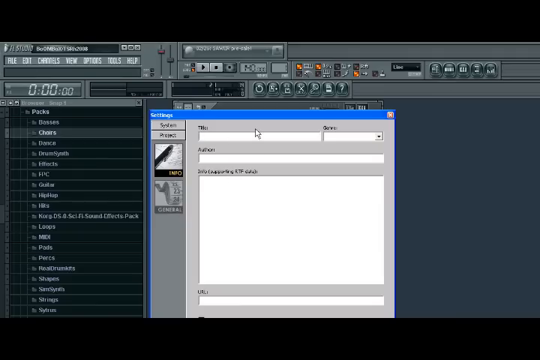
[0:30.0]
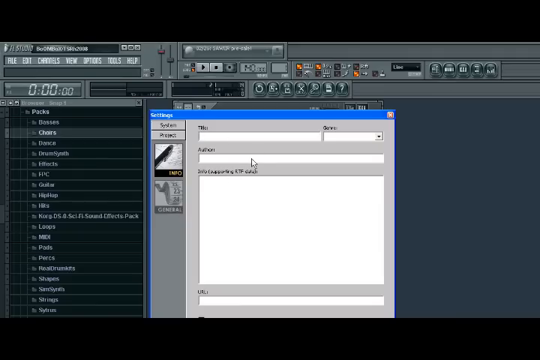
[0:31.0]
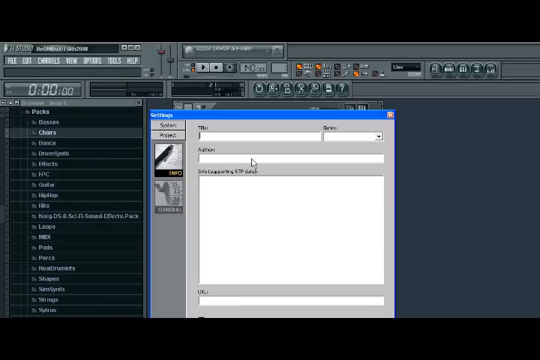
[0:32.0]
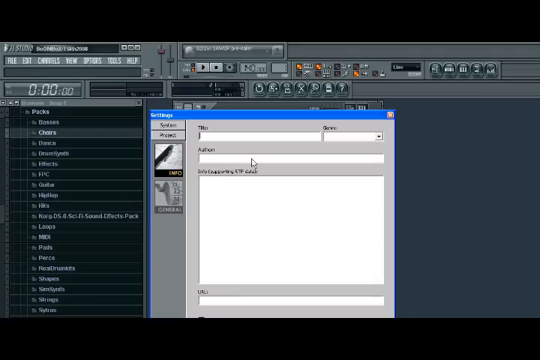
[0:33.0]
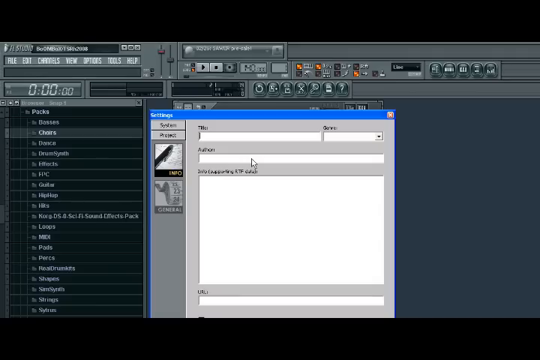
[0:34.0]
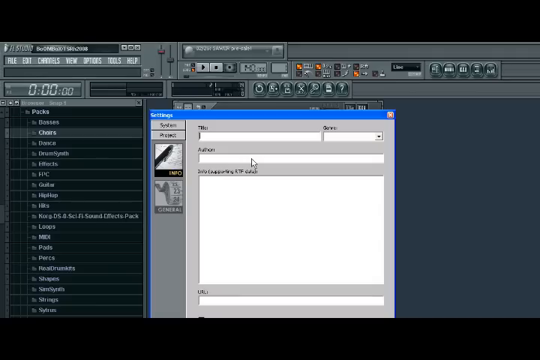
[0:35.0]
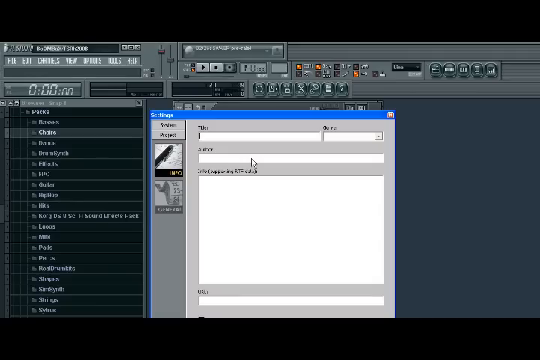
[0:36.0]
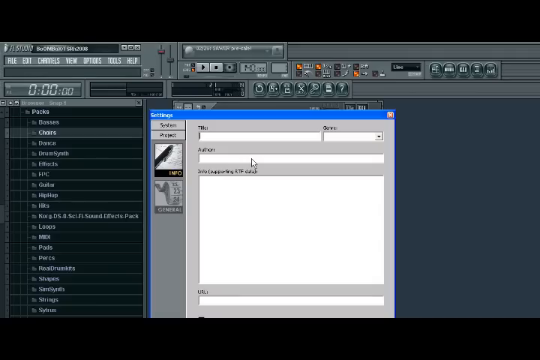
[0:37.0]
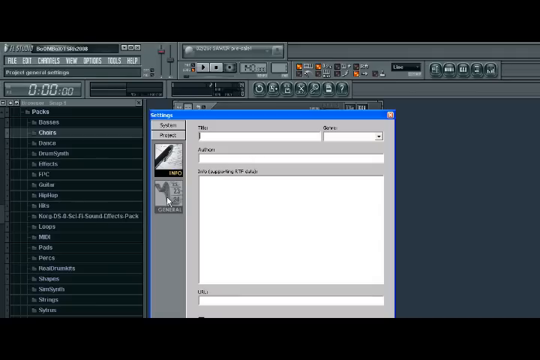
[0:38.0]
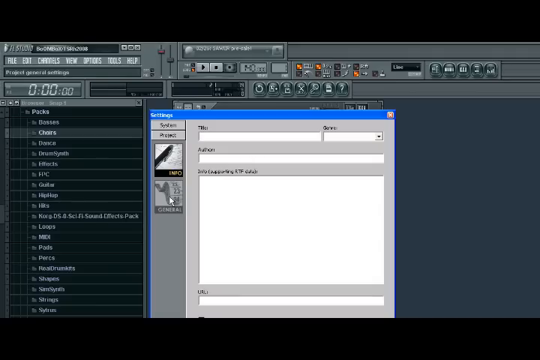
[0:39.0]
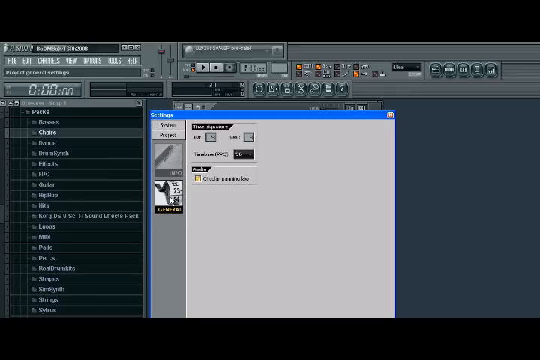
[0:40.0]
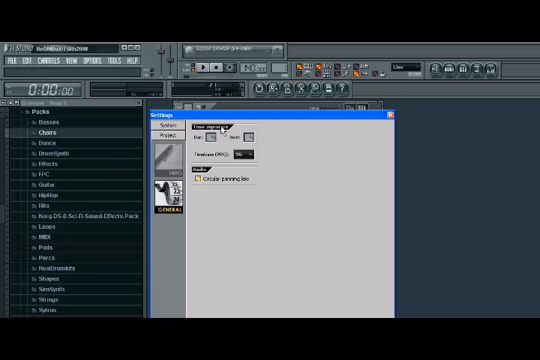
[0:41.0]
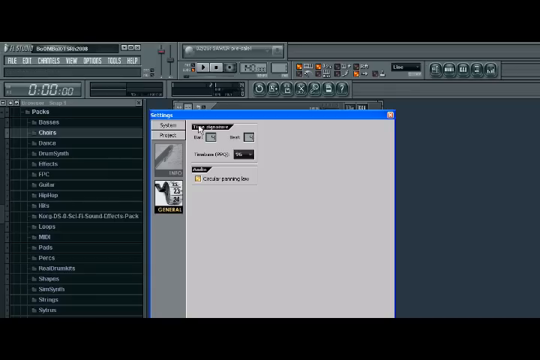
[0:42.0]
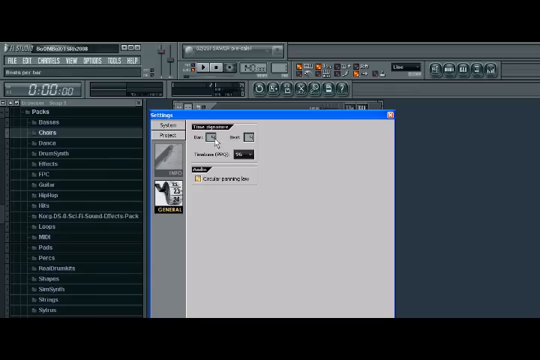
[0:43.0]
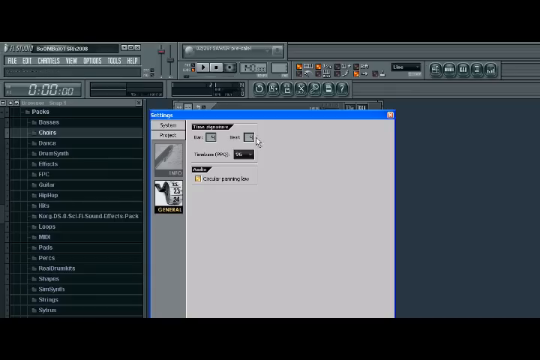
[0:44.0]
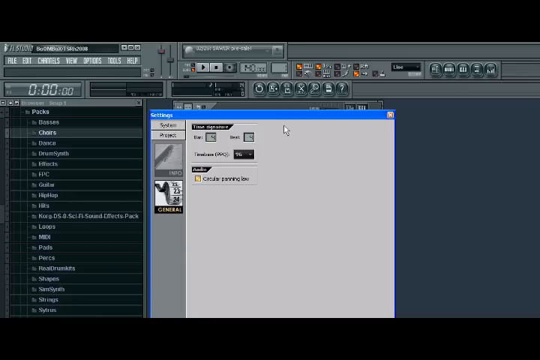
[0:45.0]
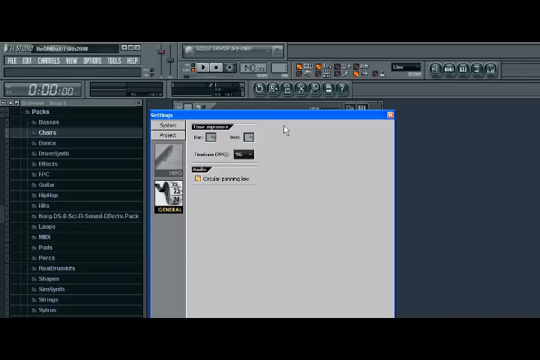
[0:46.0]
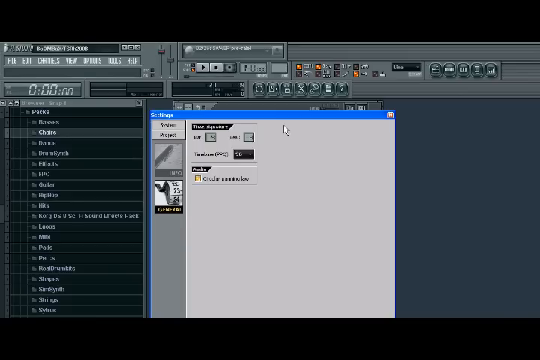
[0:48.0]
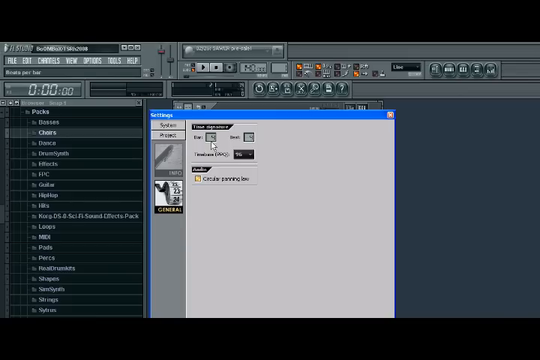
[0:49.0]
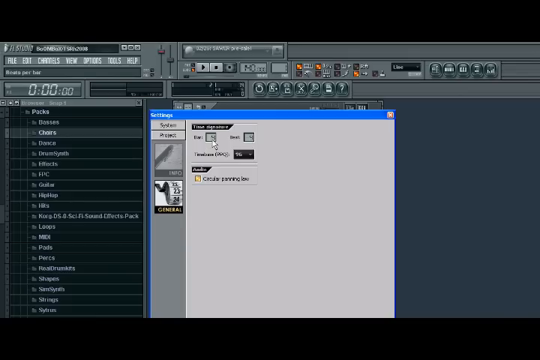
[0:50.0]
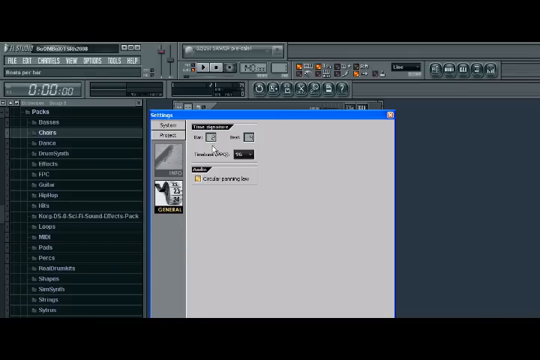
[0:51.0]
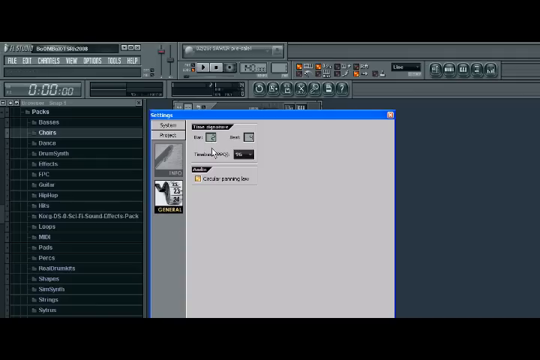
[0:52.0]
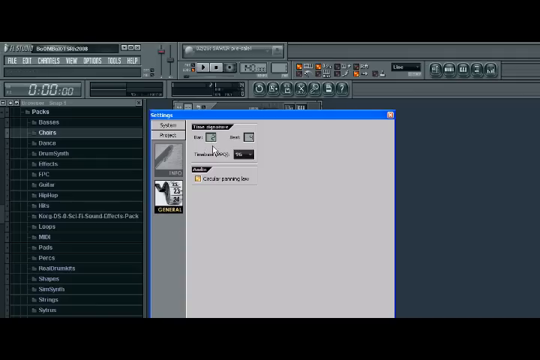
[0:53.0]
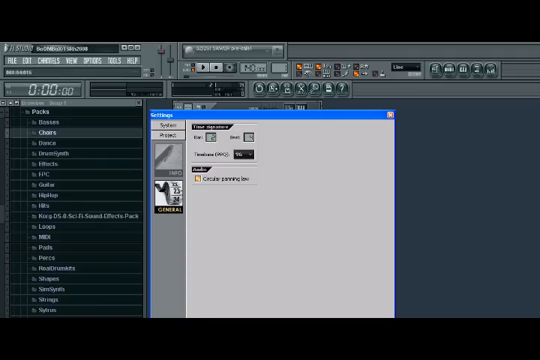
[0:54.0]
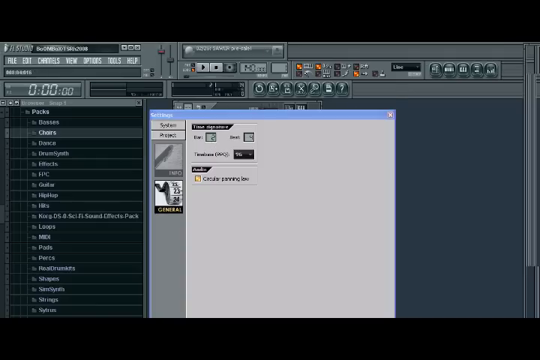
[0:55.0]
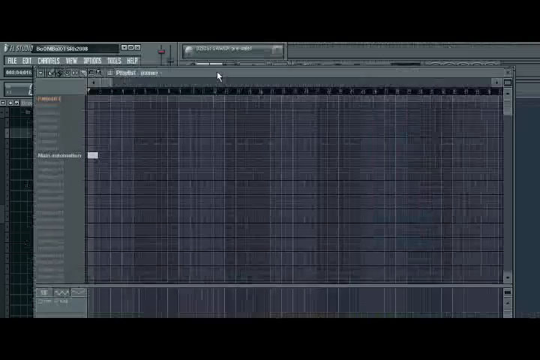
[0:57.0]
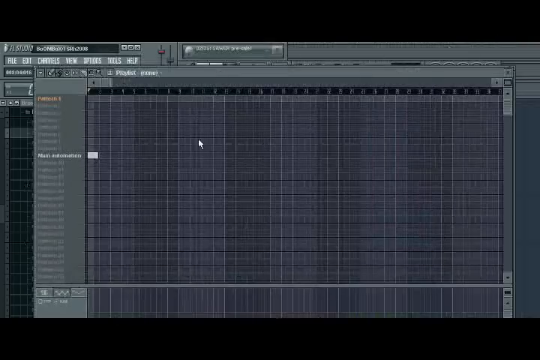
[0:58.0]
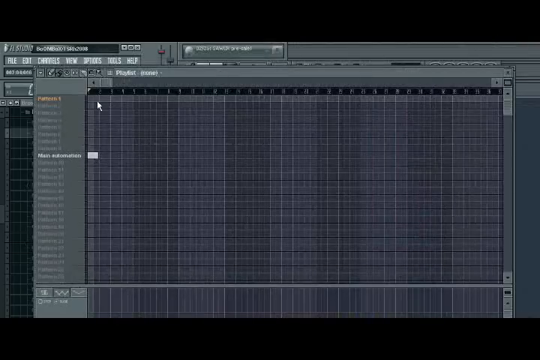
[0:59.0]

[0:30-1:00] The video quality is fairly low and blurry, making it hard to tell what the text says. The view transitions to another screen showing settings and input fields on a sort of light gray and gray background, with a blue header and square settings in white. A specific beat, or some sort of song or channel, is then opened in FL Studio, bringing up a secondary screen that is dragged onto the original main screen. No people or animals appear. On the last screen there seem to be purple and black hexagonal lines.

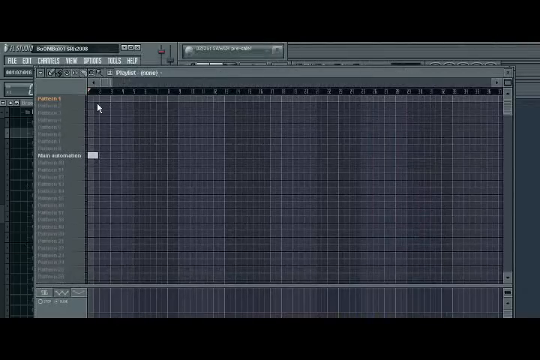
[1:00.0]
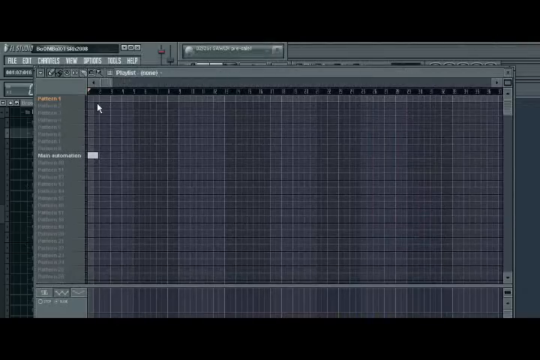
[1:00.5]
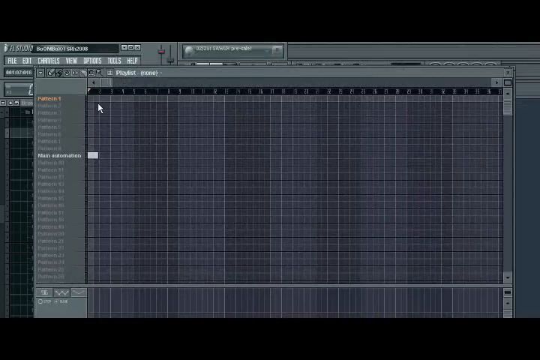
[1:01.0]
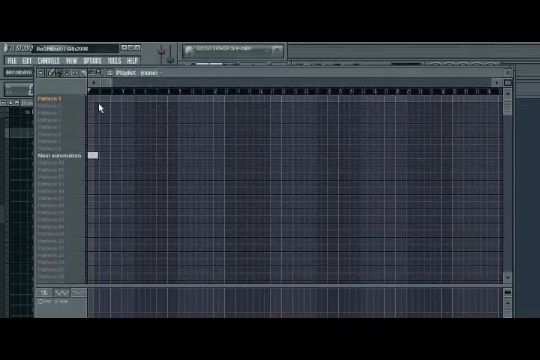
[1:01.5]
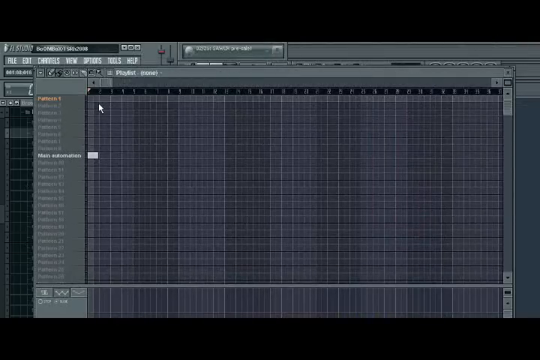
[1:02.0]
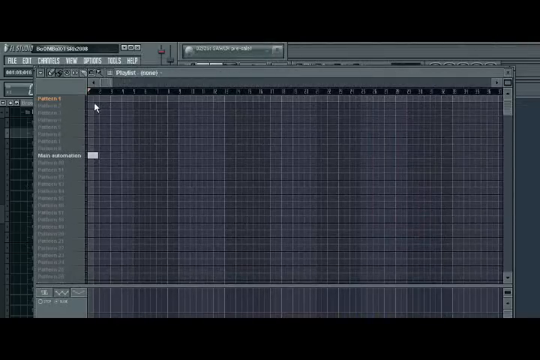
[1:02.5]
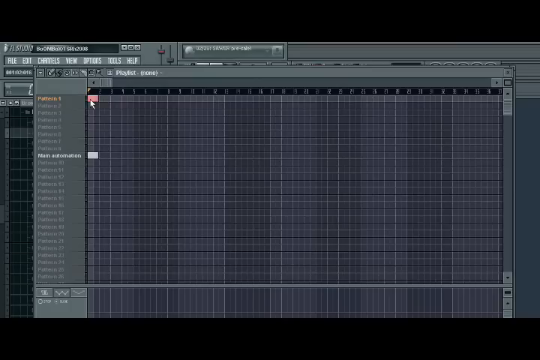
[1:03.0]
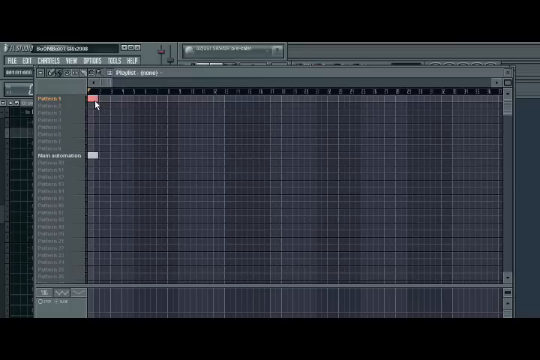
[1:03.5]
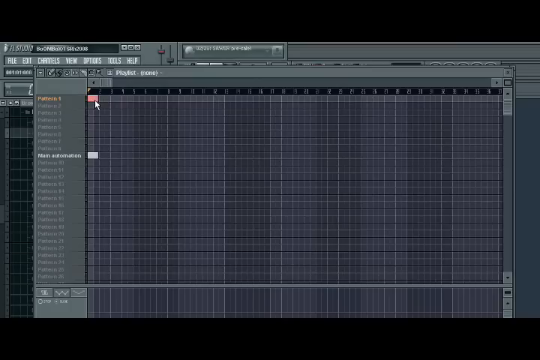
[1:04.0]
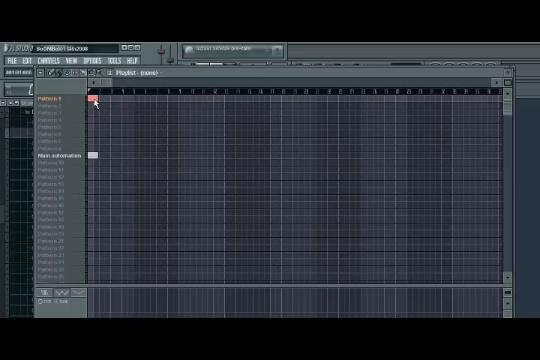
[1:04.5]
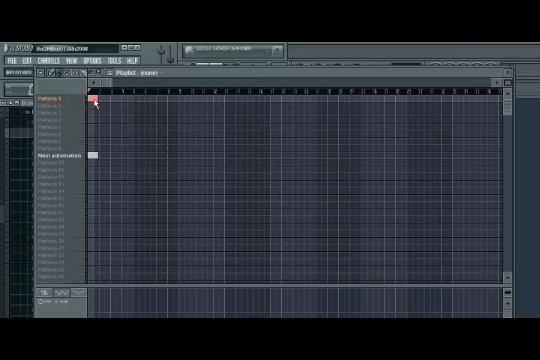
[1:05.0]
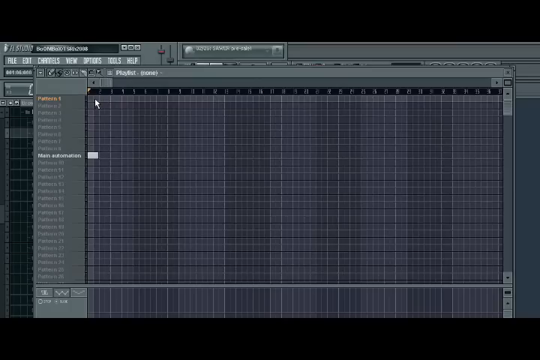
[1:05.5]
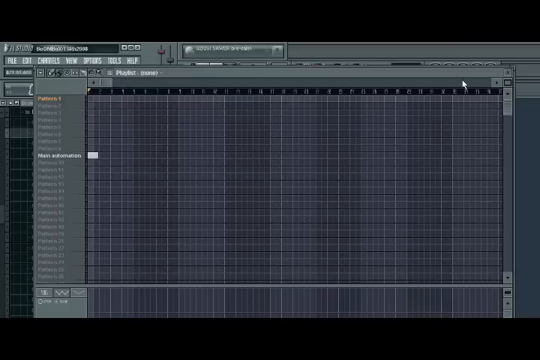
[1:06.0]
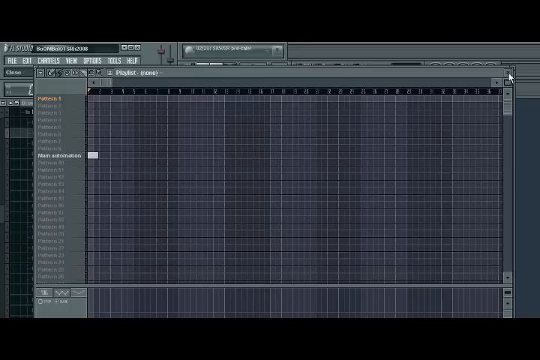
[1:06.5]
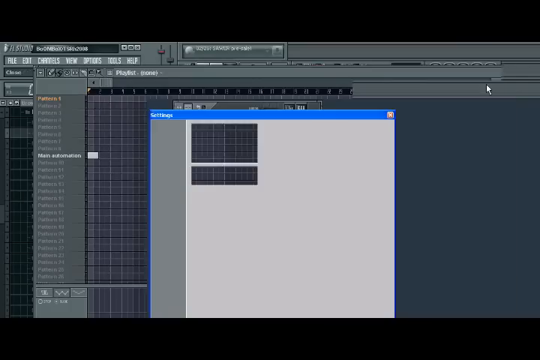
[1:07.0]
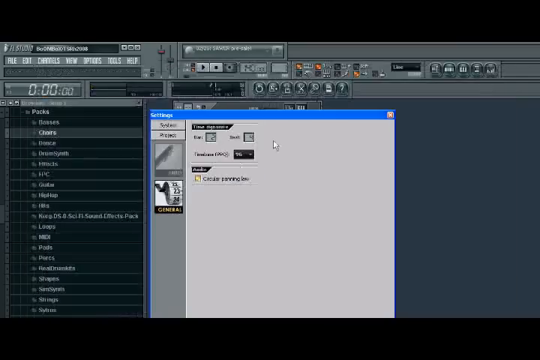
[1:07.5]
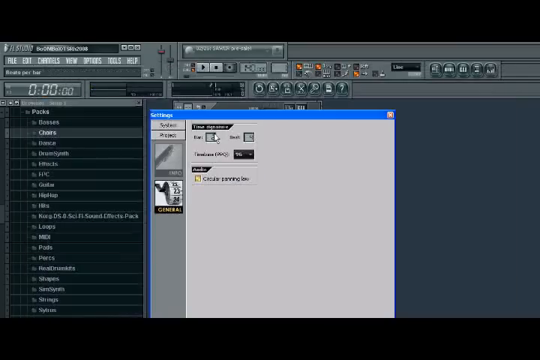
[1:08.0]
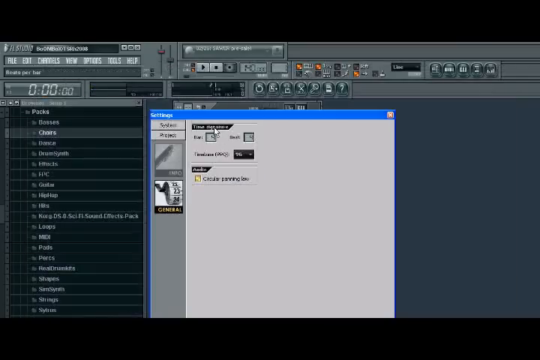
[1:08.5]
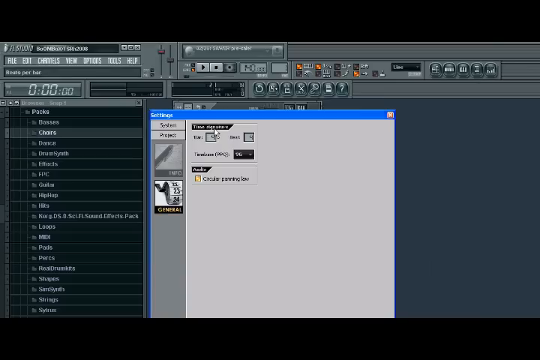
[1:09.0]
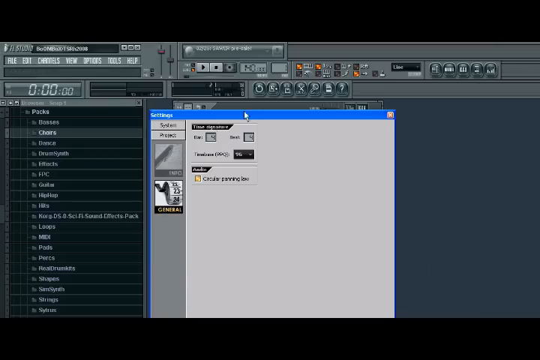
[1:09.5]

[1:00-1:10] Hexagonal lines continue to be shown on a kind of purple and blue background, showing a particular part of the FL Studio application. The user clicks into one of the boxes in this background, then closes out of the section, goes back to the settings, and changes an option. No people, animals or physical objects appear. The setting changes little, except that one of the pages opened in FL Studio is closed and transitions to a different page.